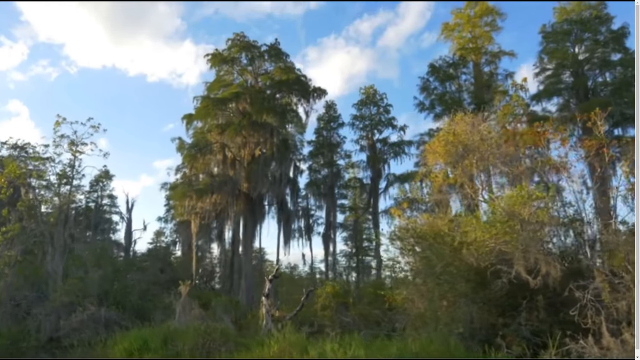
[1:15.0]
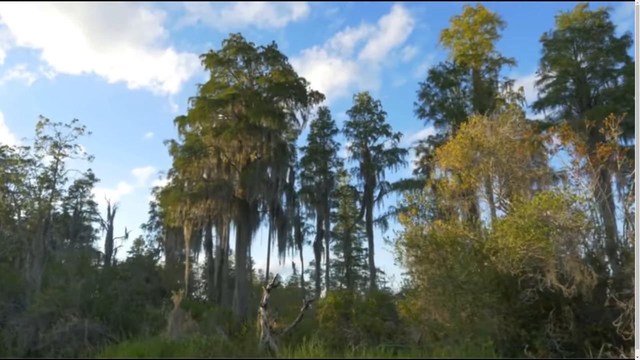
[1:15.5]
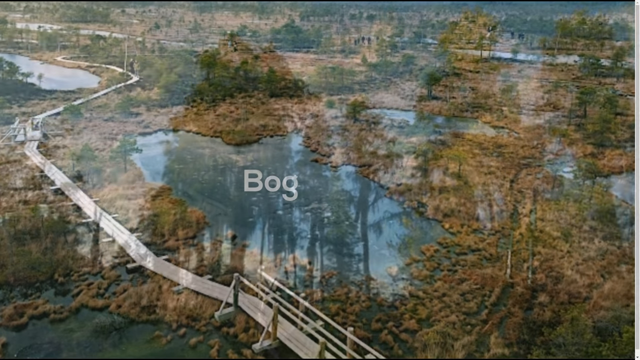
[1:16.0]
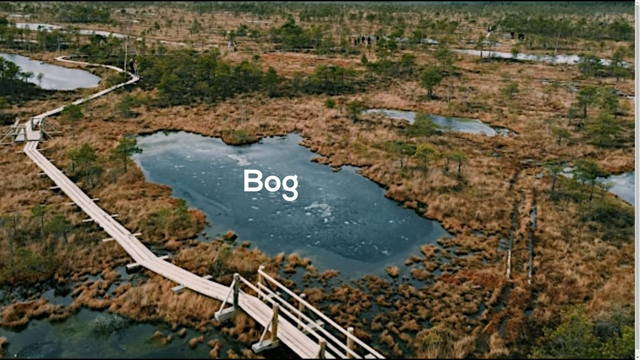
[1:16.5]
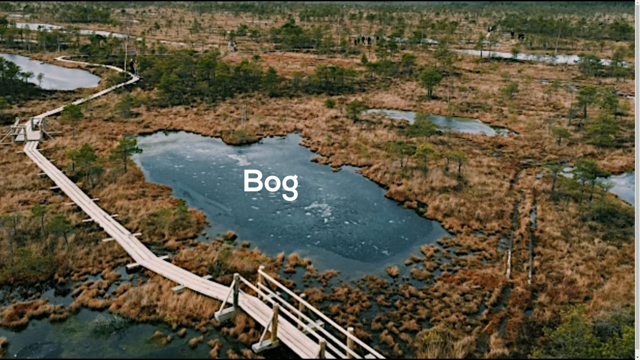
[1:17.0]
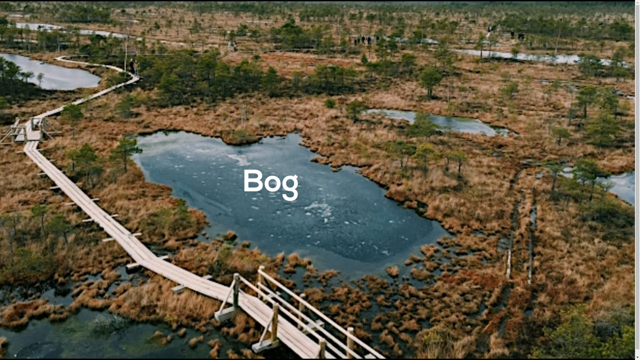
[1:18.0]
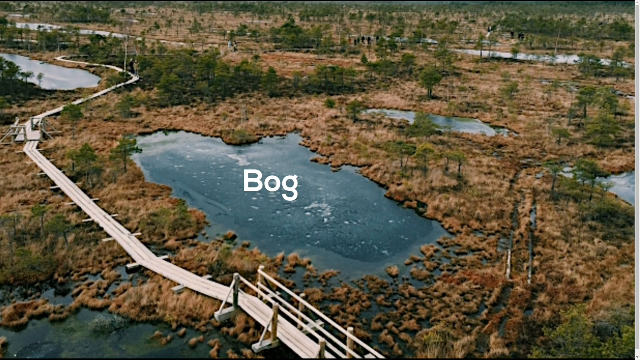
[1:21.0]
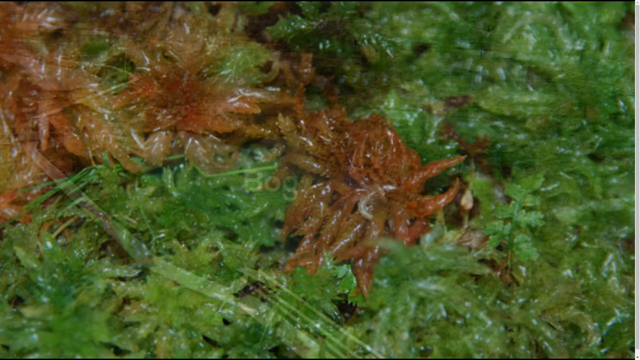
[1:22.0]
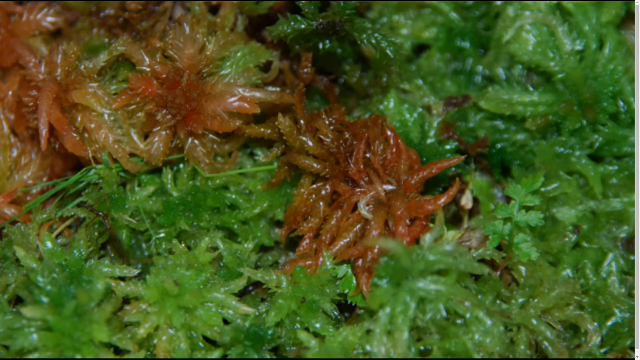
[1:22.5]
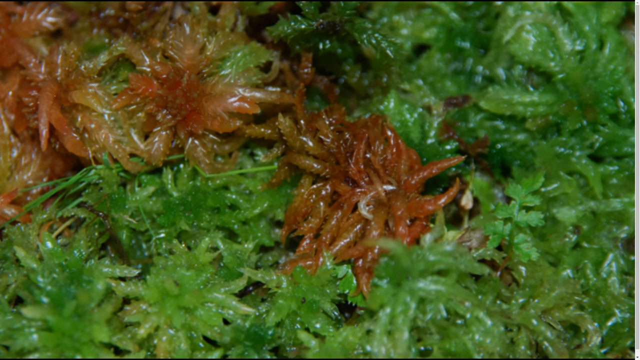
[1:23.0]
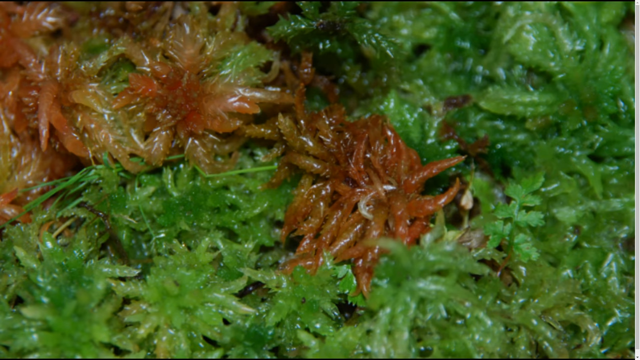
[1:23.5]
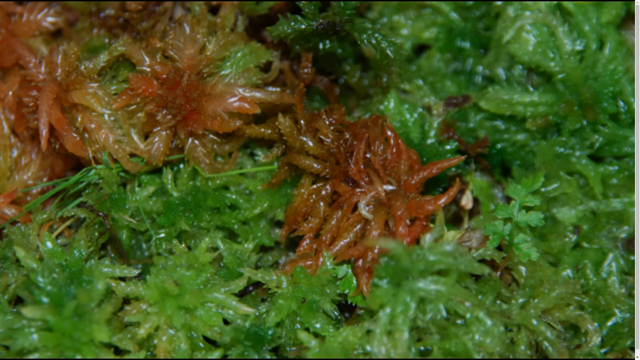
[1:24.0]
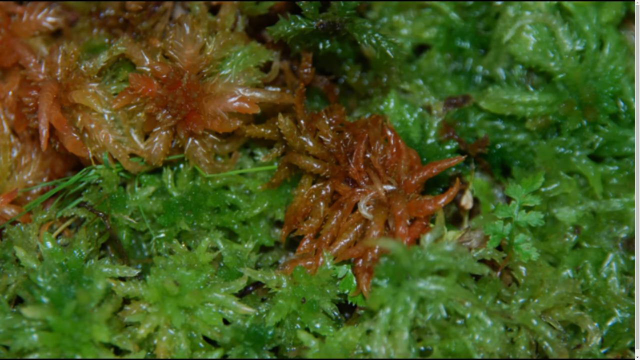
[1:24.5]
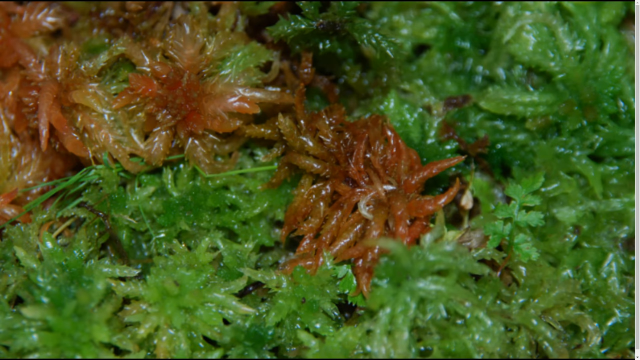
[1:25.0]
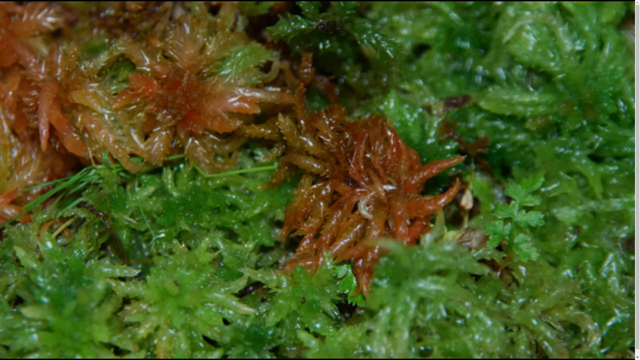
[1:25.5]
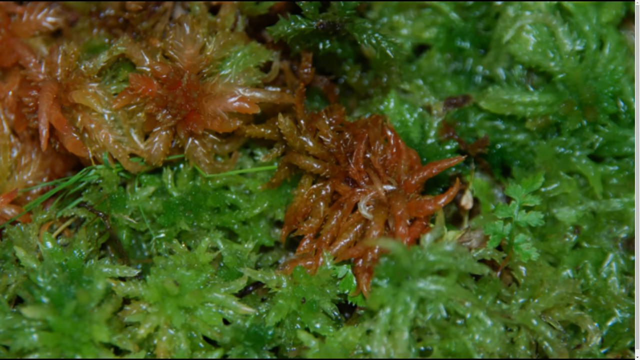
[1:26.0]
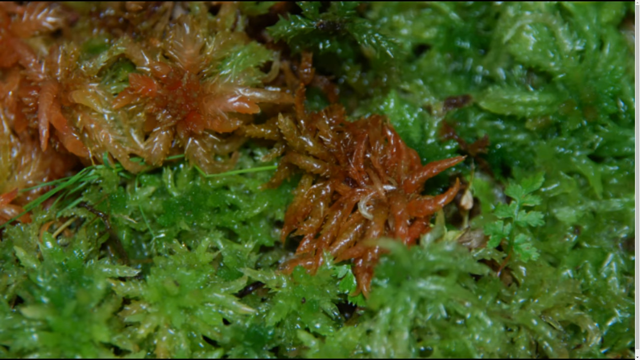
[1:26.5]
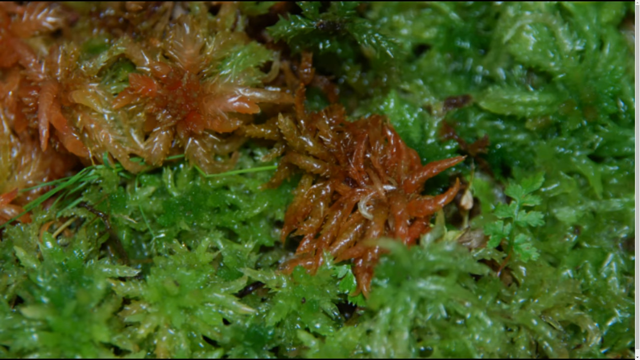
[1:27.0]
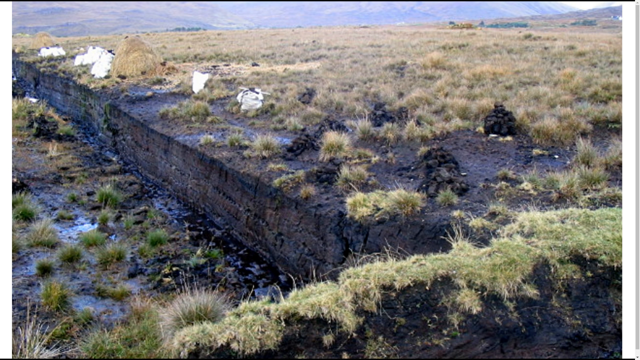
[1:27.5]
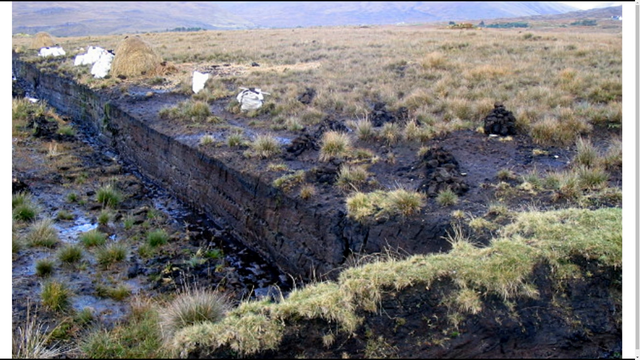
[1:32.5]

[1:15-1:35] The focus is on bogs. At the very beginning, a title in white words appears on top of a picture of a bog. Green foliage is shown with some amber-looking colored foliage in the midst of it. Fenced-in areas appear to be shown, and bridges and fences are built throughout the bog. There is also a cut area of what appears to be a hill in the bog, where the land itself is dark, almost black; the foliage is still green, and the ground has a steepness to it.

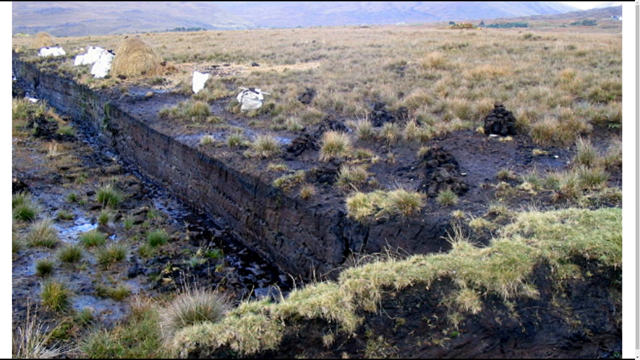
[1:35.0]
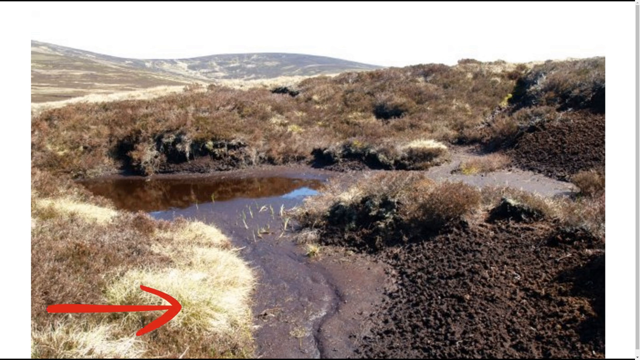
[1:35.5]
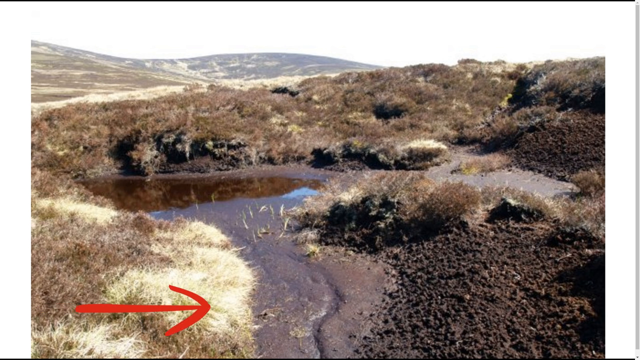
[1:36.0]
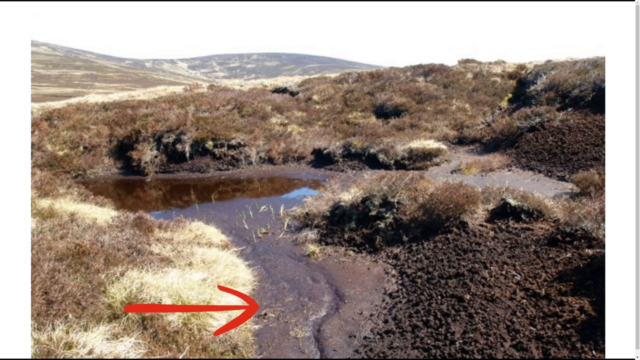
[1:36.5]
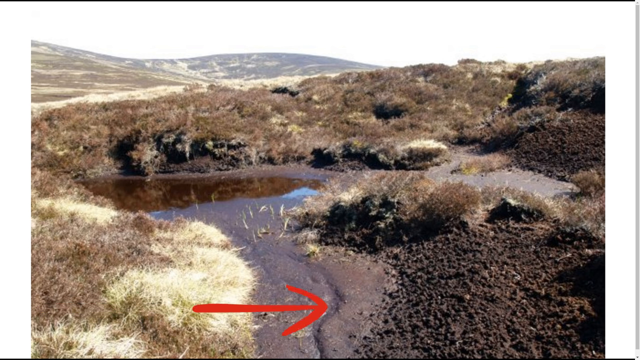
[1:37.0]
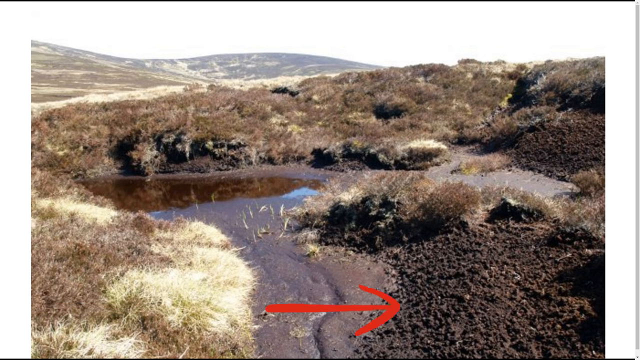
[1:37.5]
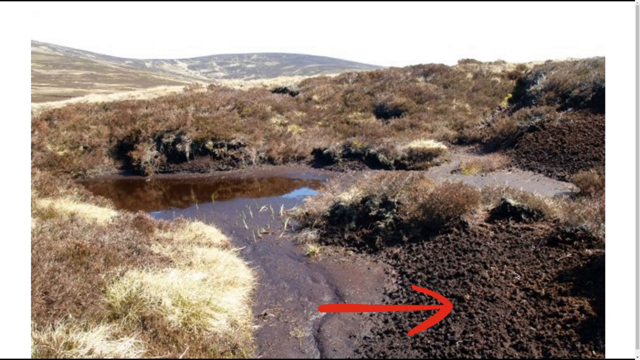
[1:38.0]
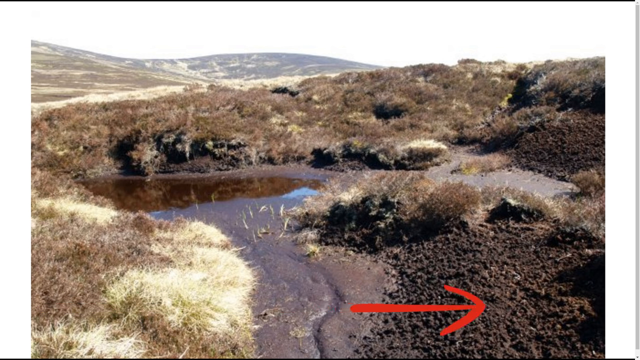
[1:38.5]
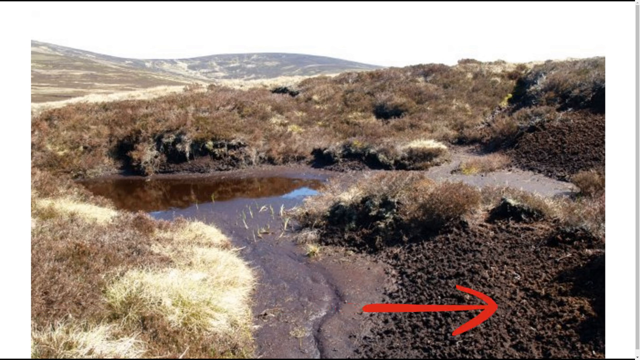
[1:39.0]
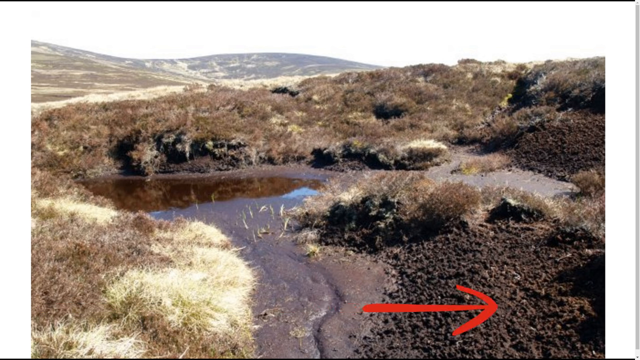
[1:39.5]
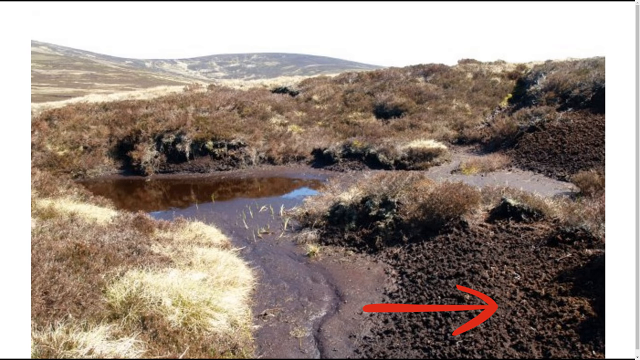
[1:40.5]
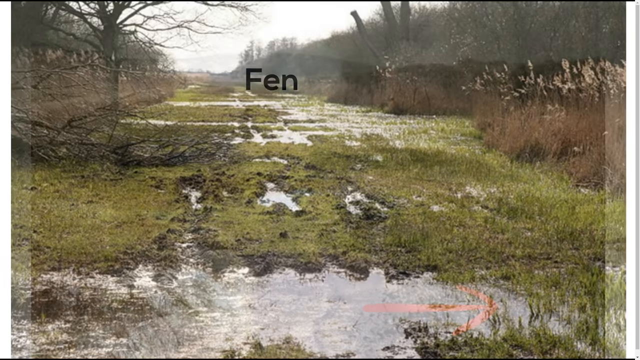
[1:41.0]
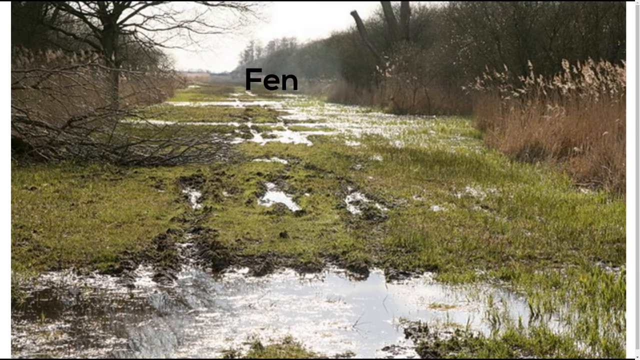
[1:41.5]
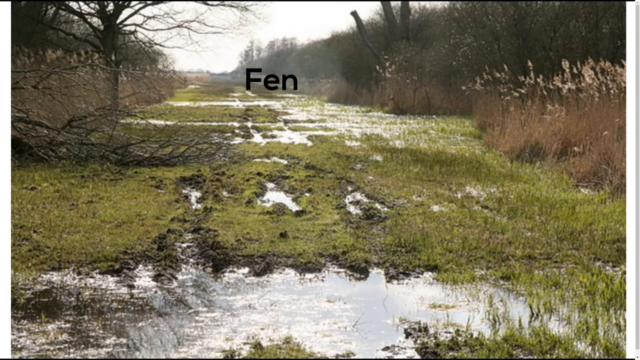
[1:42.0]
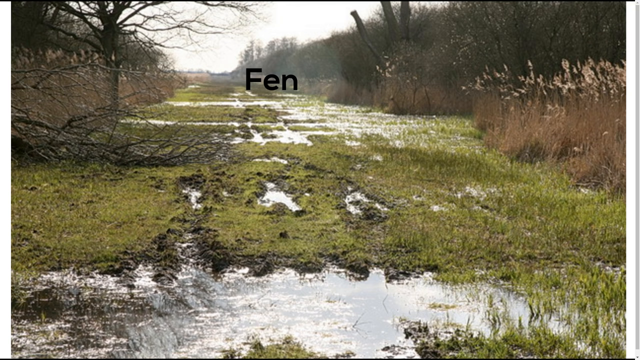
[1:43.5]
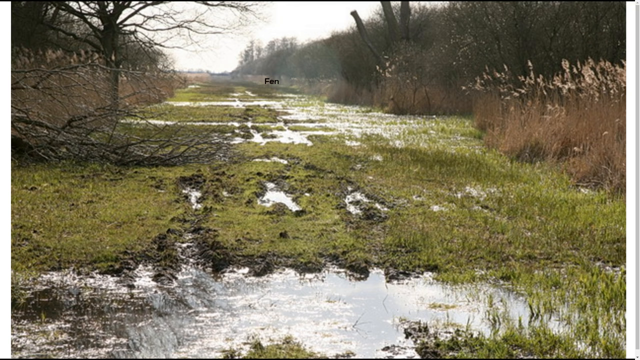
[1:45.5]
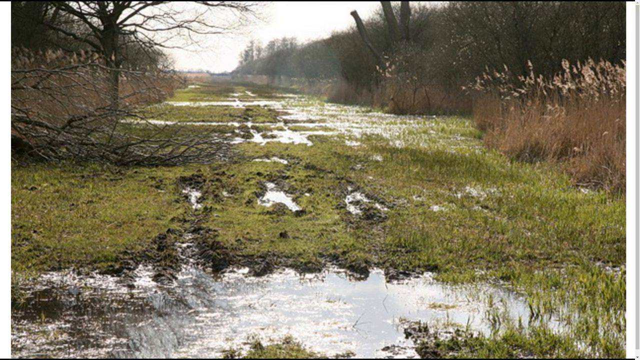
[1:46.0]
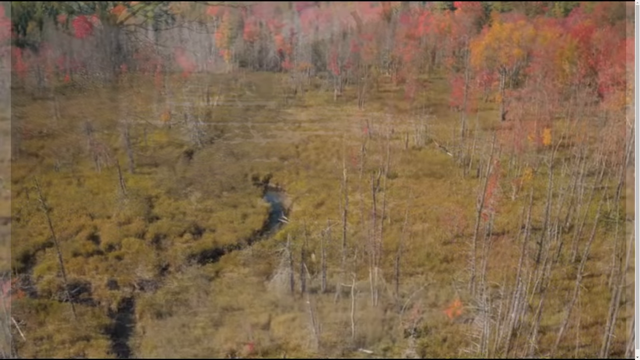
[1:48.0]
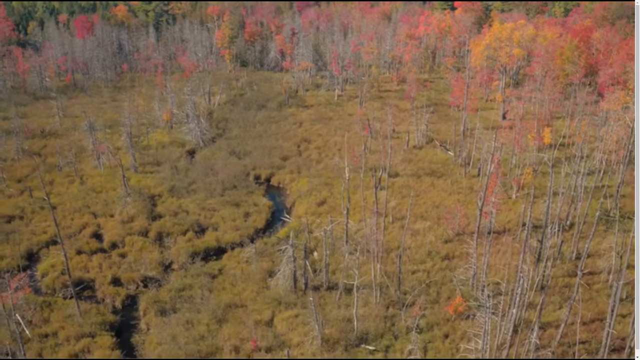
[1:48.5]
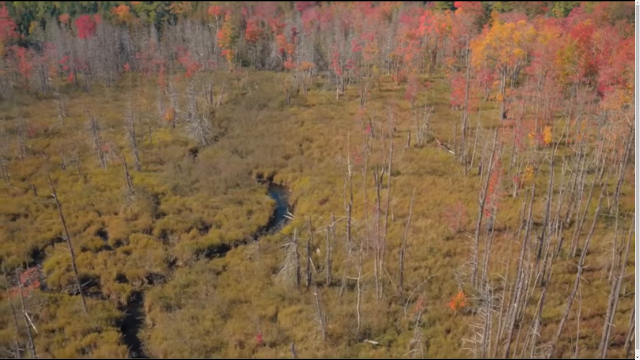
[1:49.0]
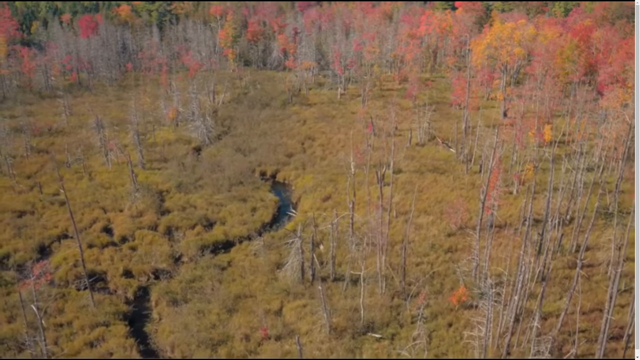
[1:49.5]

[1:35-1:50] A red arrow points to a red section with a "click to subscribe" sign; the word "subscribe" is in yellow and the other words are in white. The opening image seems to be a transition from the bog scenes, possibly showing a bog, with ground that is brown and dark gray and has some hills. Almost immediately it transitions to an image of a fen, labeled with the black letters "FEN". After that comes a picture of a winding river surrounded by green trees, with taller orange and red trees surrounding those.